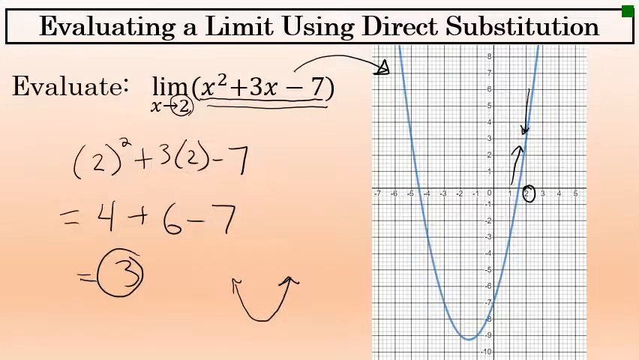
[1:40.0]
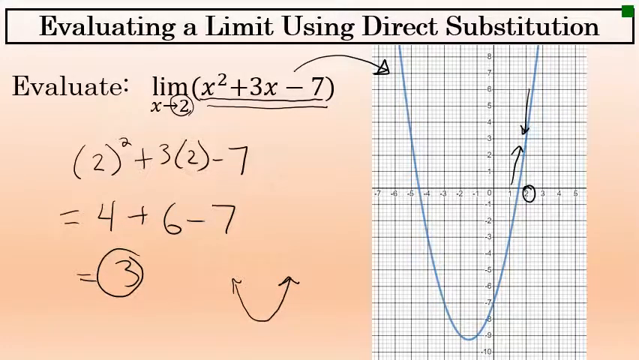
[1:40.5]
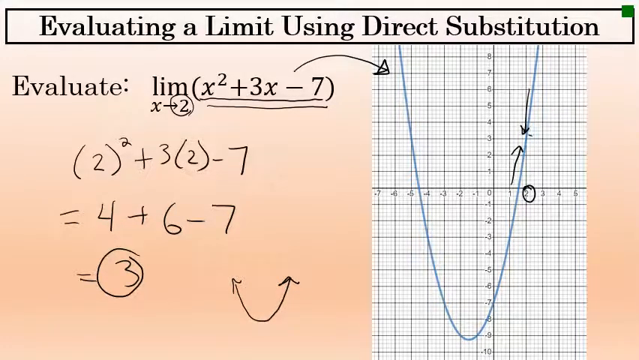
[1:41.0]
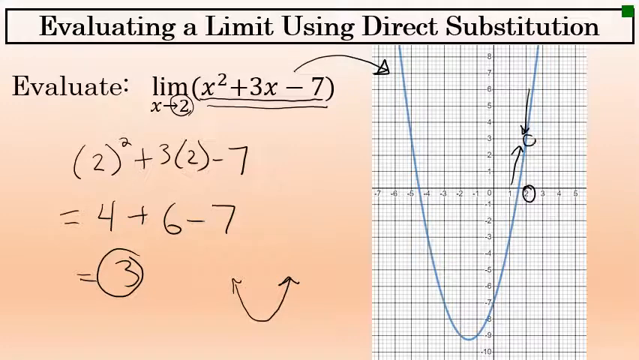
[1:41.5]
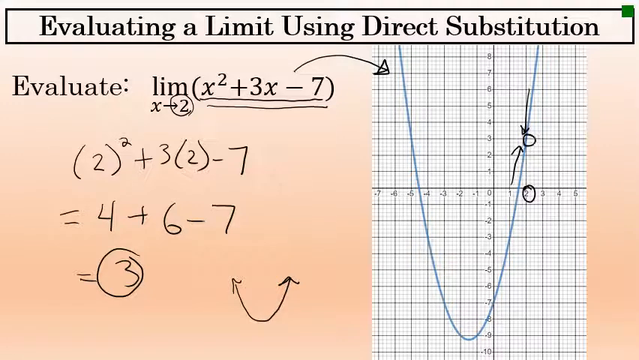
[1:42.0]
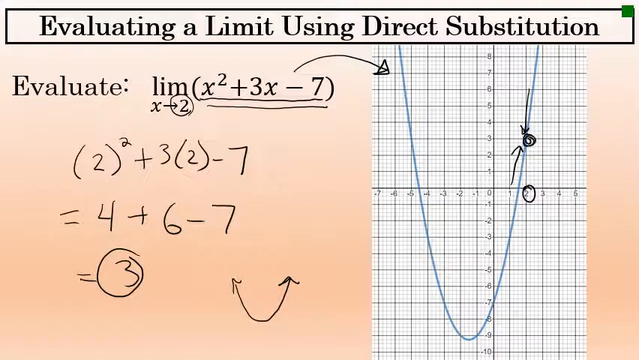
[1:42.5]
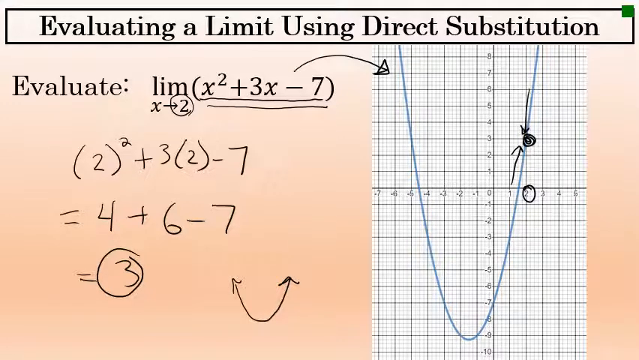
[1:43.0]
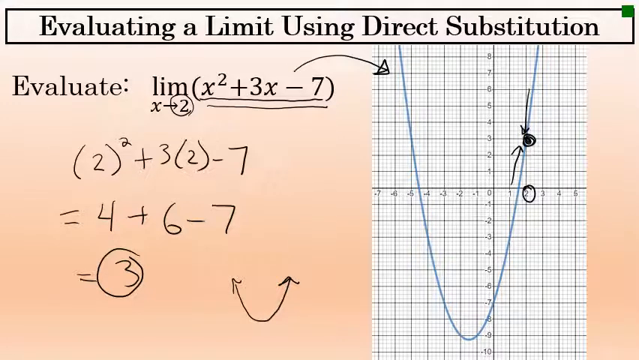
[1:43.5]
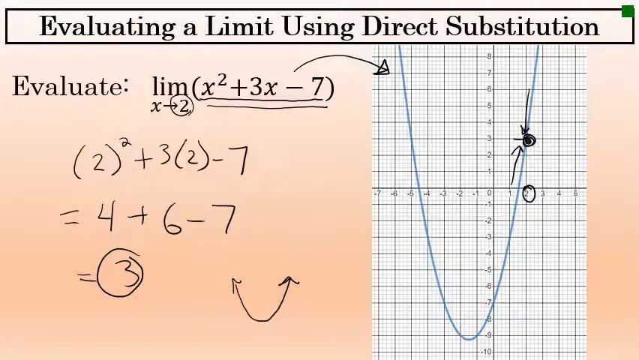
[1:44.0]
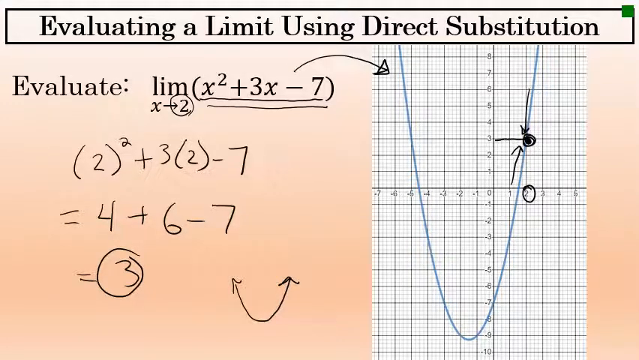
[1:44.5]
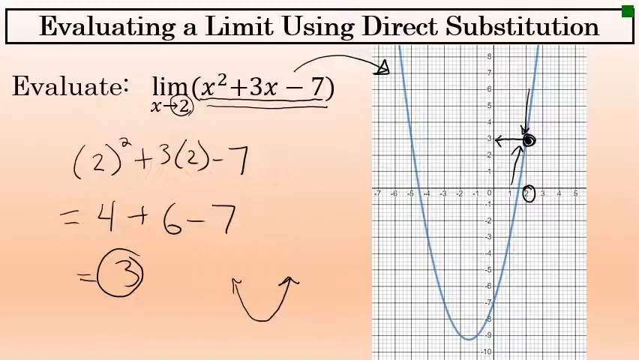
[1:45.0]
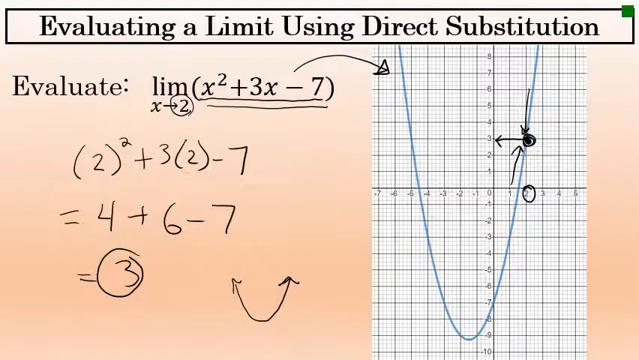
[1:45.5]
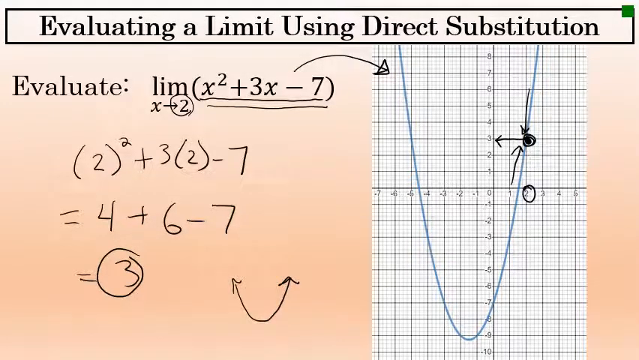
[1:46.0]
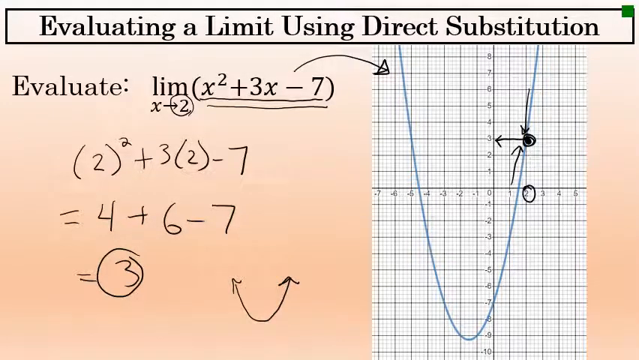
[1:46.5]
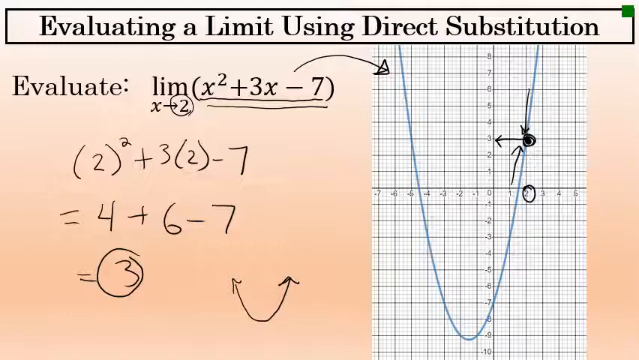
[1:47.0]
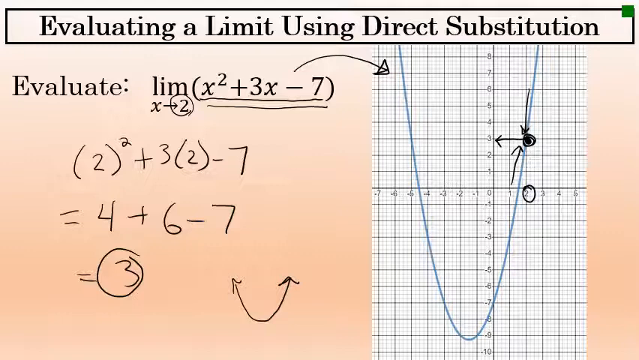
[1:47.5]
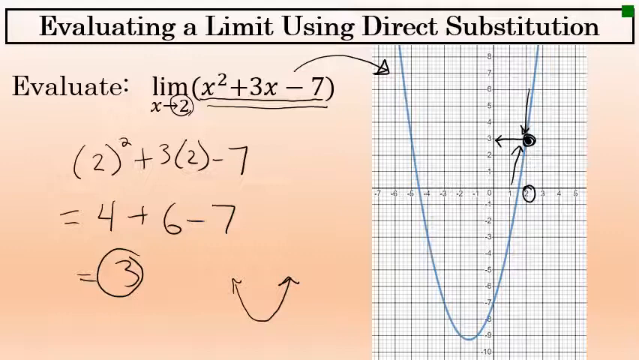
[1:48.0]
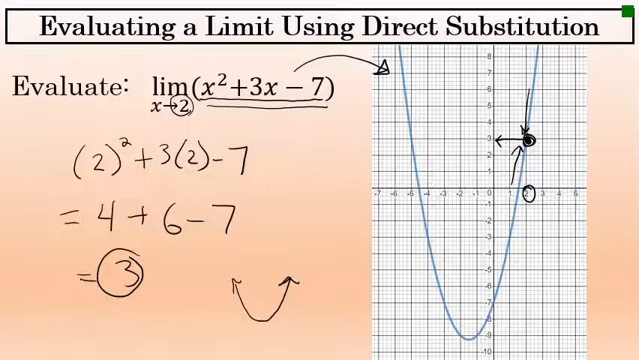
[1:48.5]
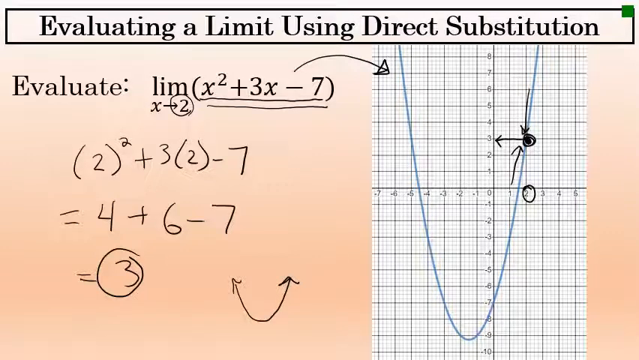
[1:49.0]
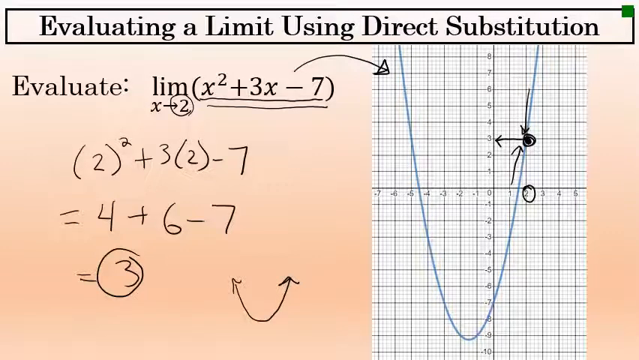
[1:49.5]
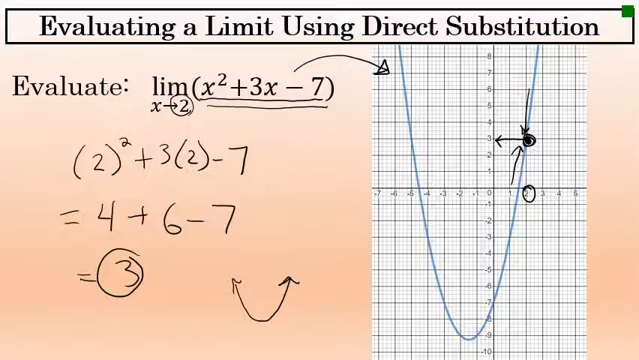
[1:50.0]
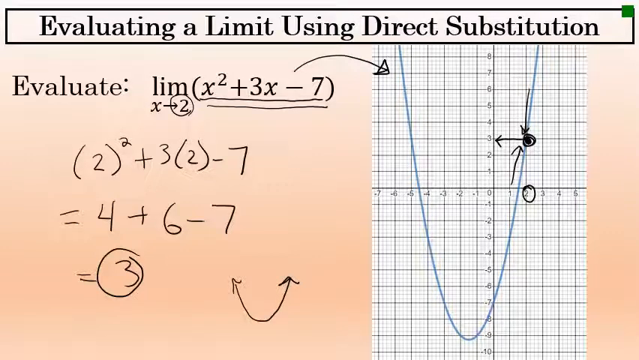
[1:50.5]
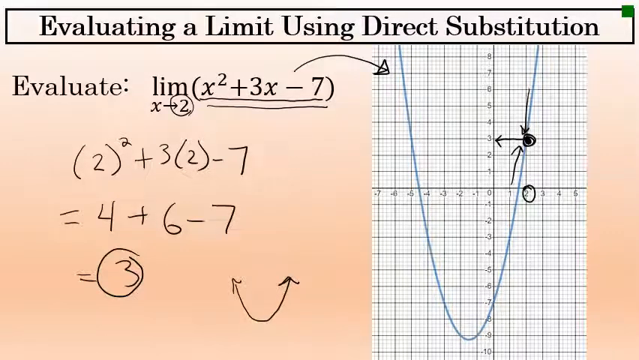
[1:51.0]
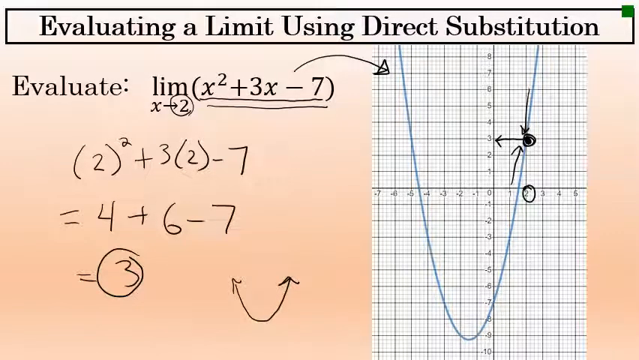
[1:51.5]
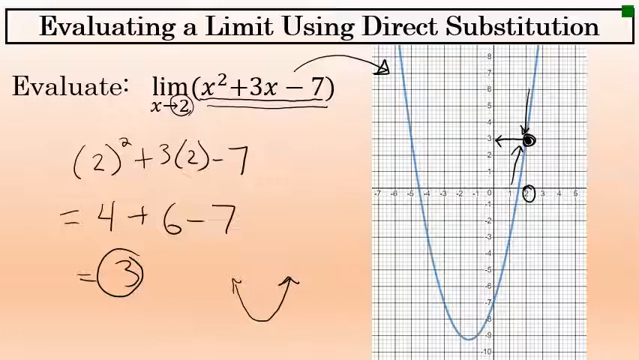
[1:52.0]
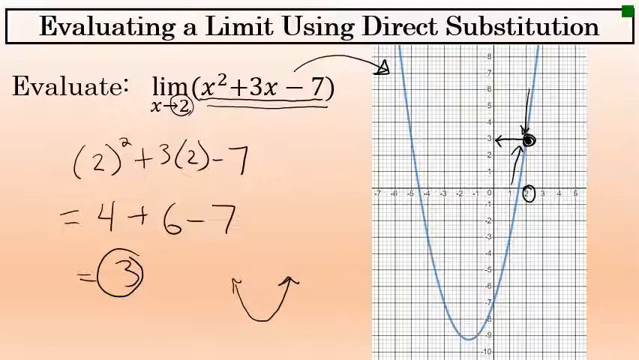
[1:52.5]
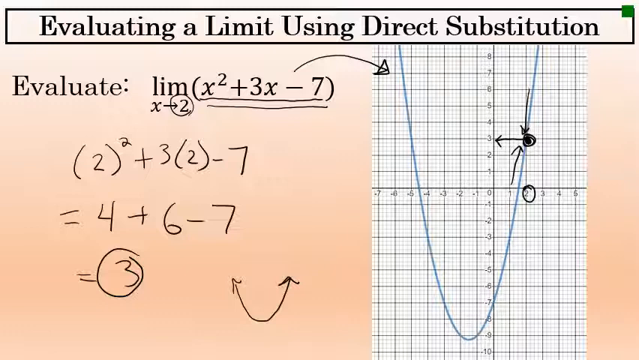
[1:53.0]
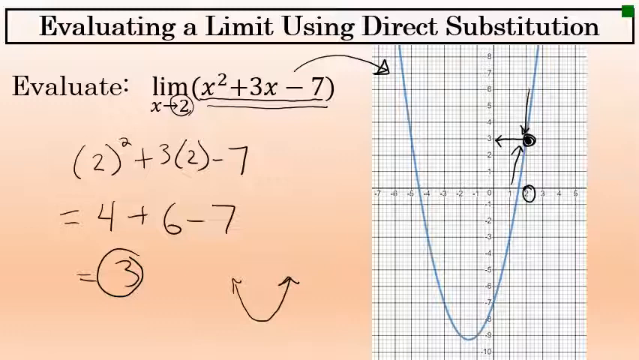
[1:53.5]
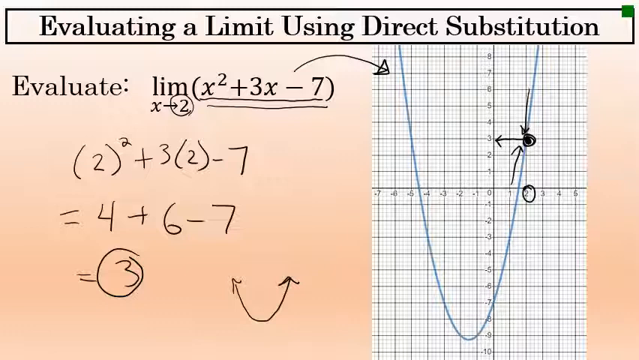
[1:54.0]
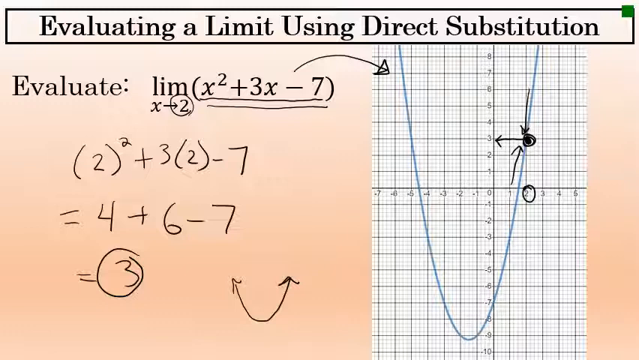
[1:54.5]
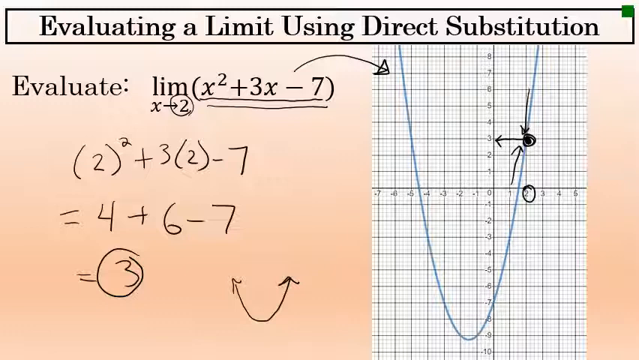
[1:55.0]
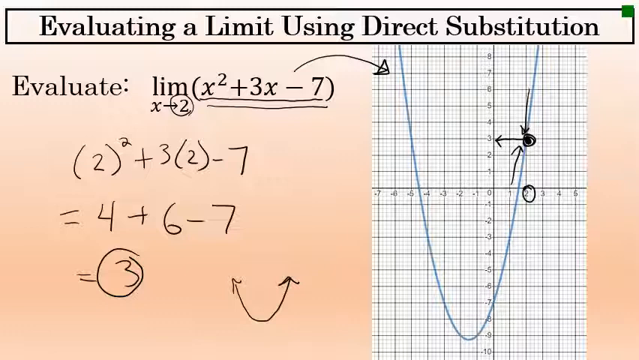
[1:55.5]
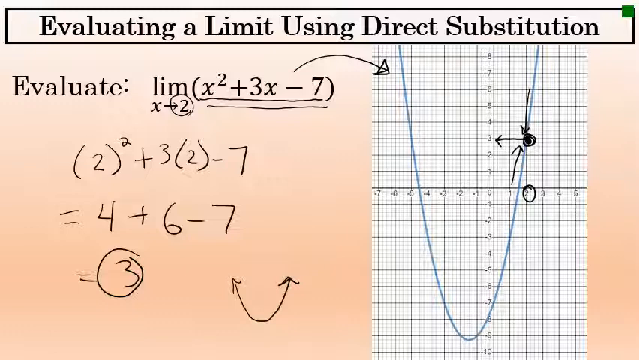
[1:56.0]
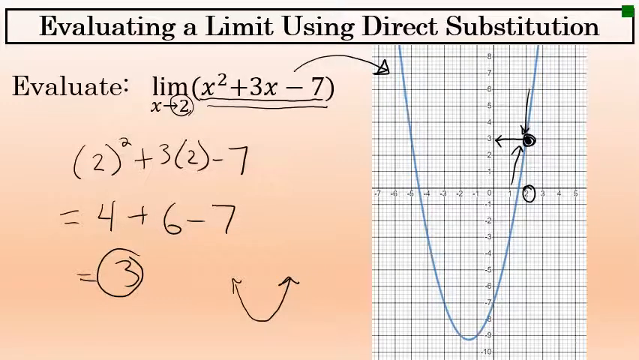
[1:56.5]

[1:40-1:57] On the left side, "Evaluate" and an equation are written going downward, with the equation solved all the way to the bottom of the left page. From the center to the right there is a graph drawn with lines, with a line going downward from the center and each box marked with numbers; another line runs from the middle section to the right side, so two lines are visible, each stretching from the top to the bottom. On the blue line on the right, two arrows are drawn, one facing up and the other facing down toward it, with a shaded circle between them. In the top right corner there is a tiny green button, and all the words on the screen are written in blue. An arrow is drawn coiled to face up, and another arrow stretches from the equation toward the graph.